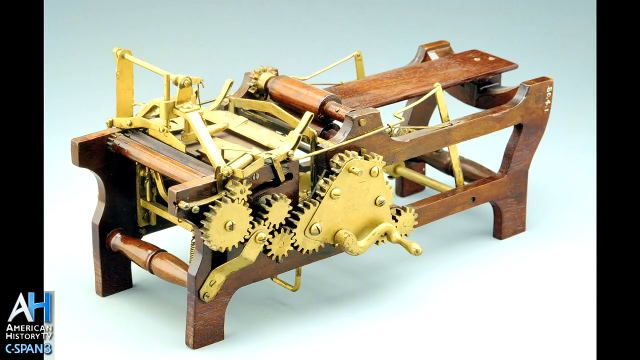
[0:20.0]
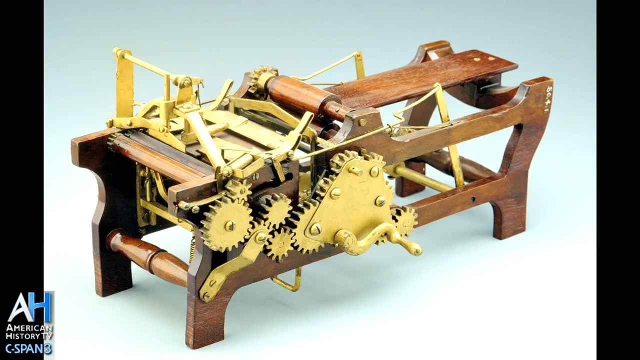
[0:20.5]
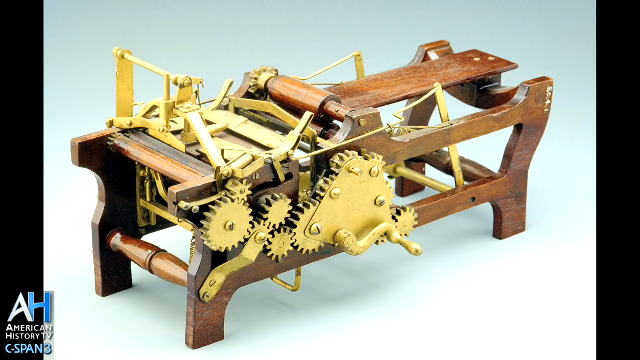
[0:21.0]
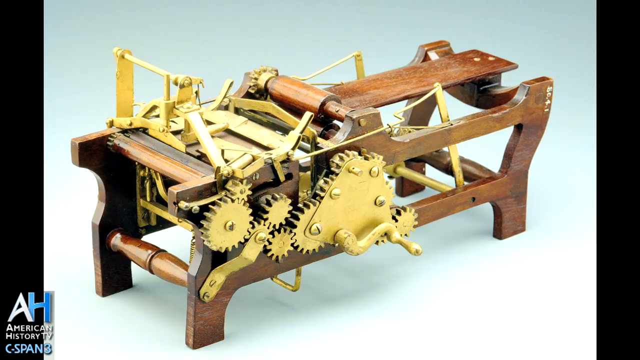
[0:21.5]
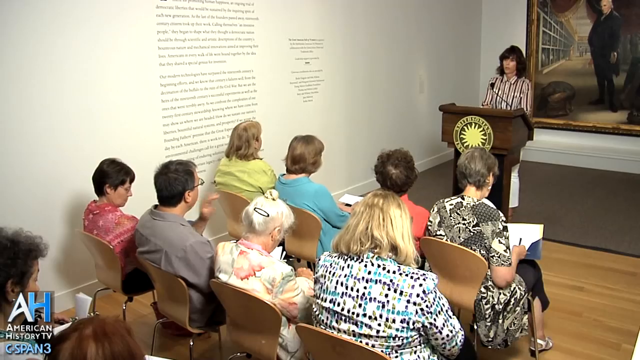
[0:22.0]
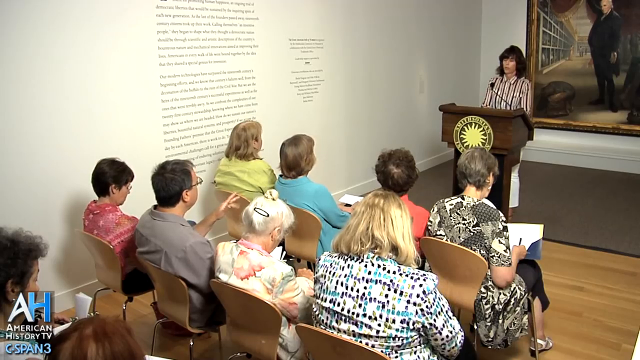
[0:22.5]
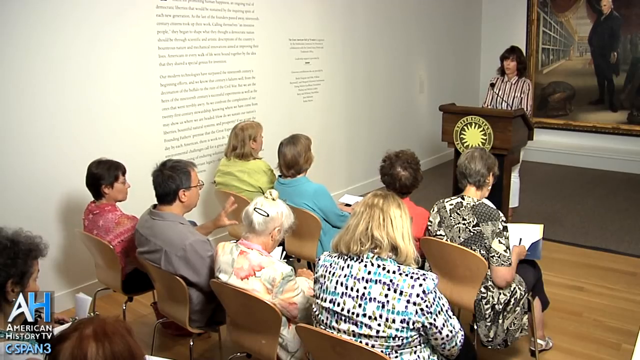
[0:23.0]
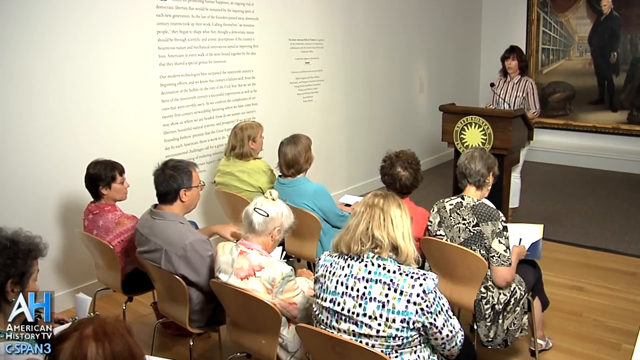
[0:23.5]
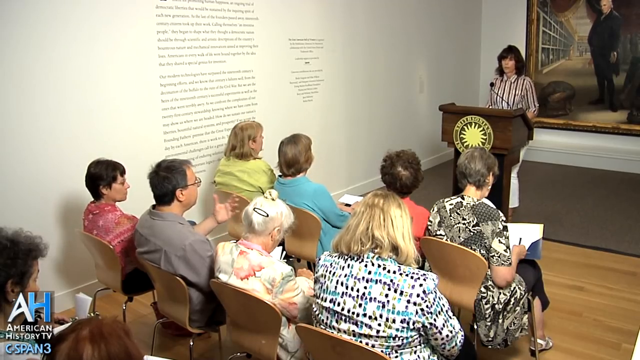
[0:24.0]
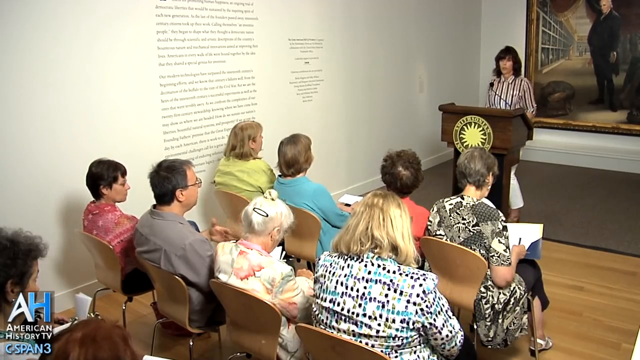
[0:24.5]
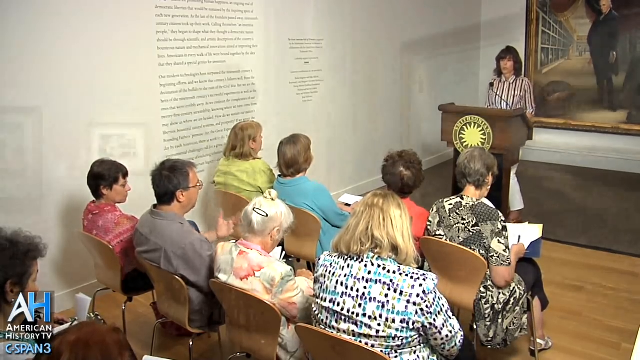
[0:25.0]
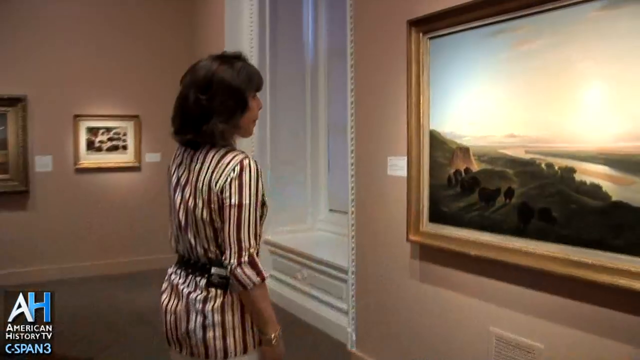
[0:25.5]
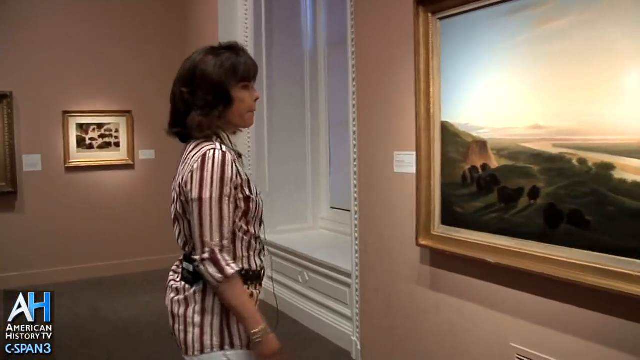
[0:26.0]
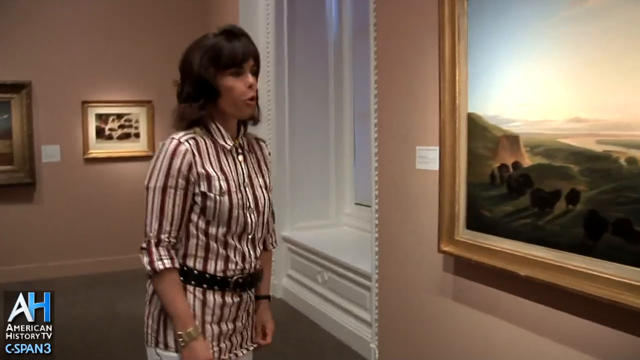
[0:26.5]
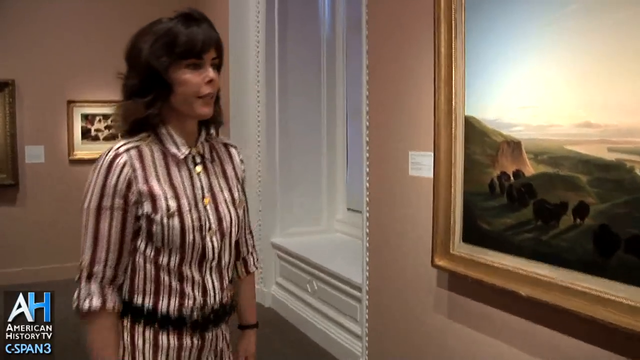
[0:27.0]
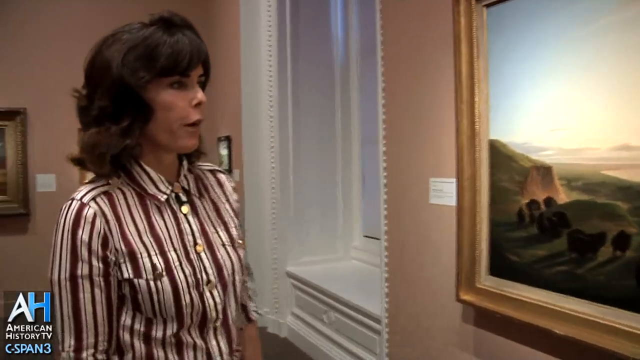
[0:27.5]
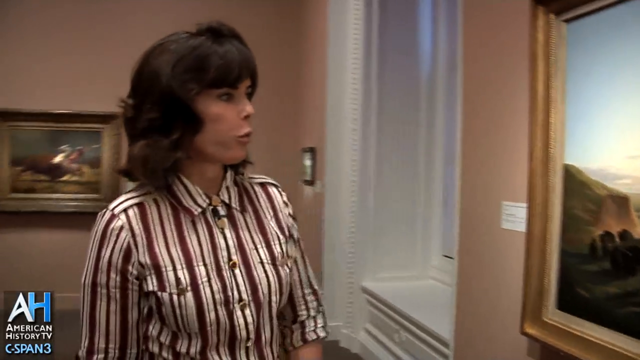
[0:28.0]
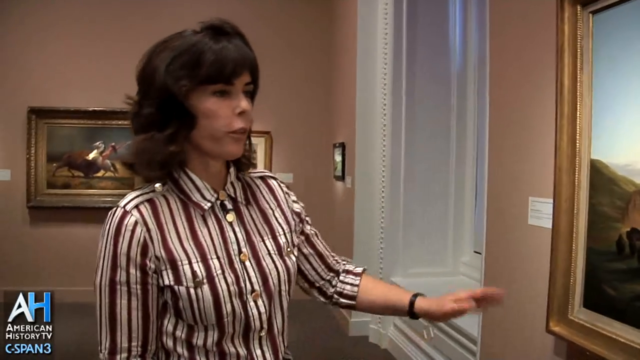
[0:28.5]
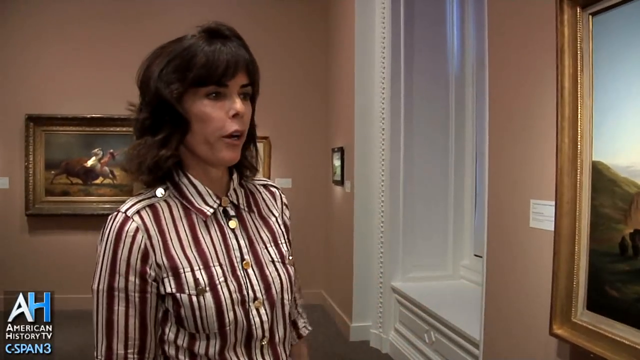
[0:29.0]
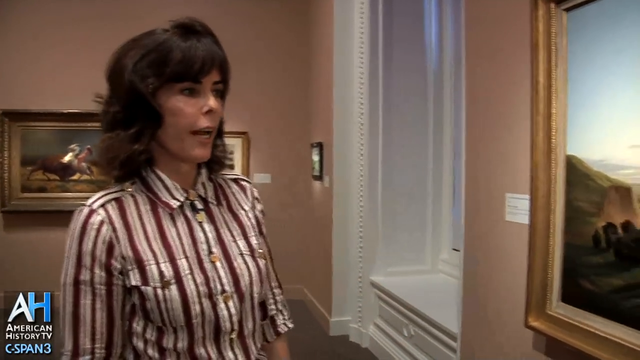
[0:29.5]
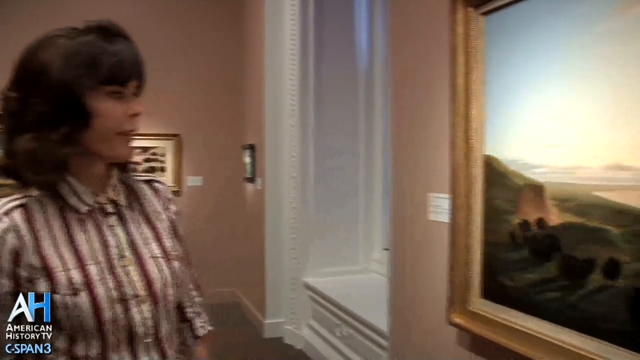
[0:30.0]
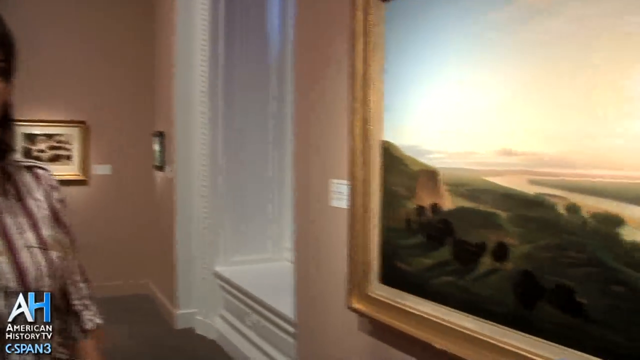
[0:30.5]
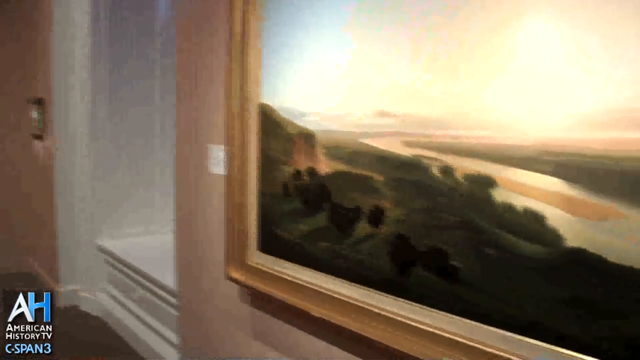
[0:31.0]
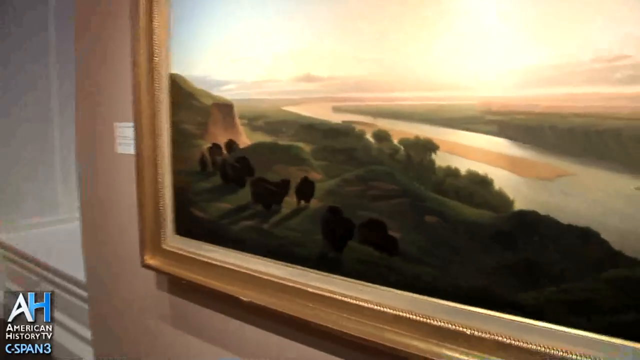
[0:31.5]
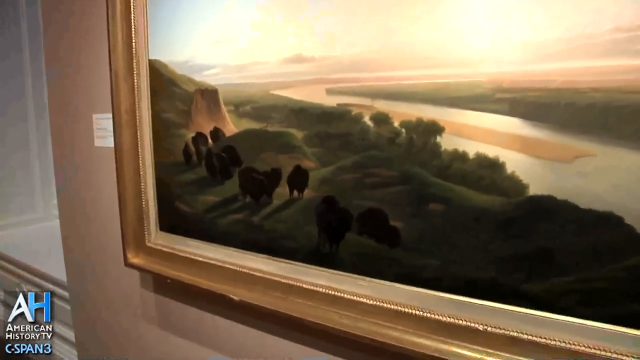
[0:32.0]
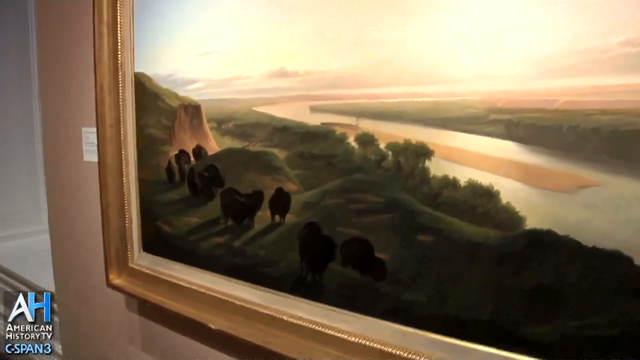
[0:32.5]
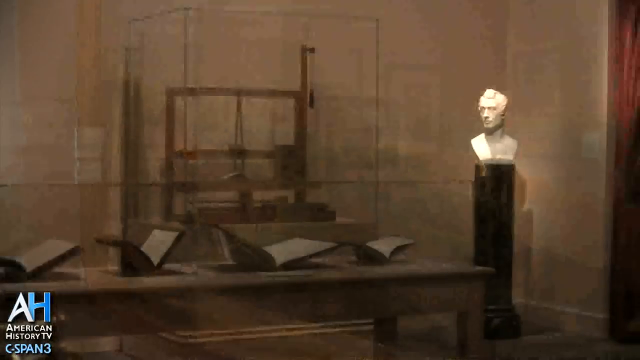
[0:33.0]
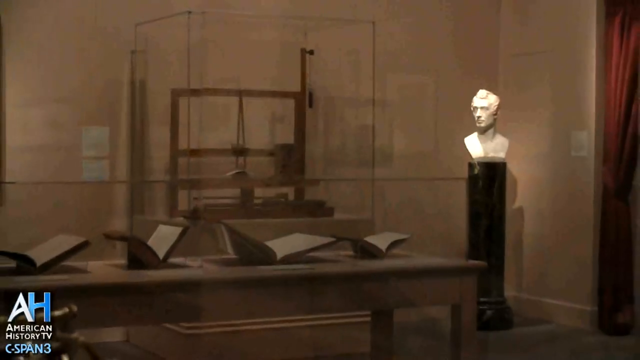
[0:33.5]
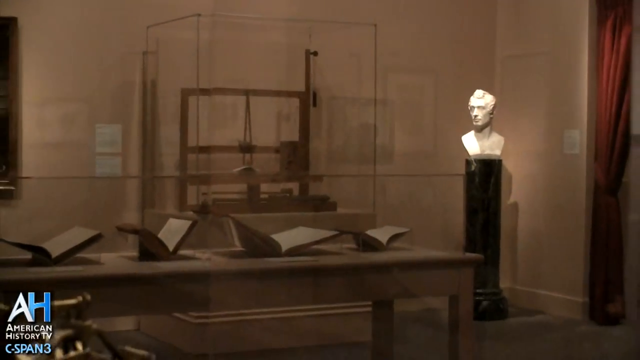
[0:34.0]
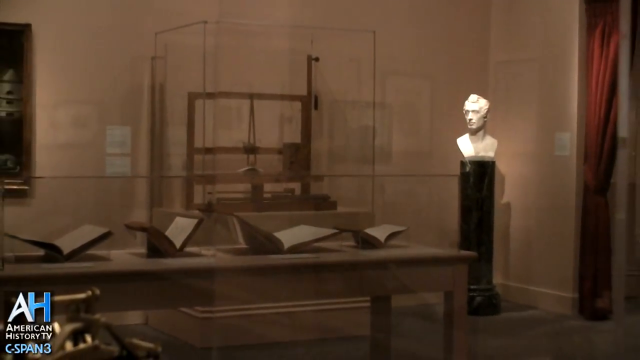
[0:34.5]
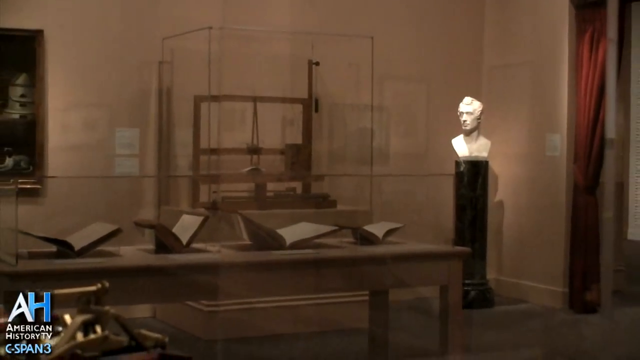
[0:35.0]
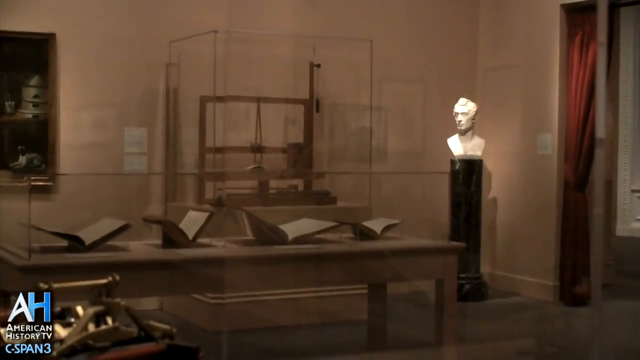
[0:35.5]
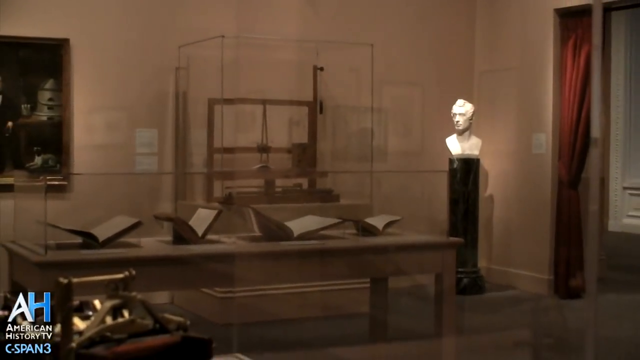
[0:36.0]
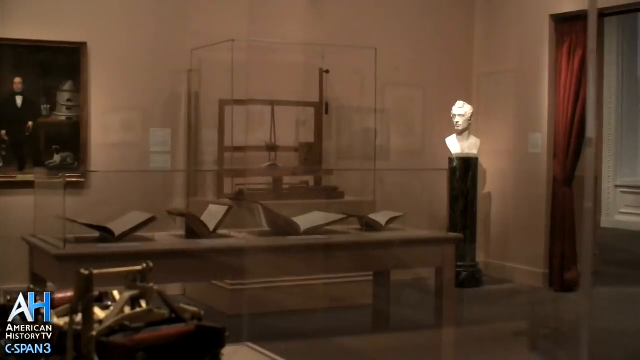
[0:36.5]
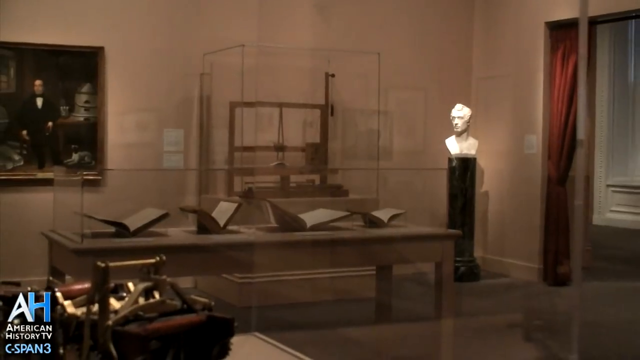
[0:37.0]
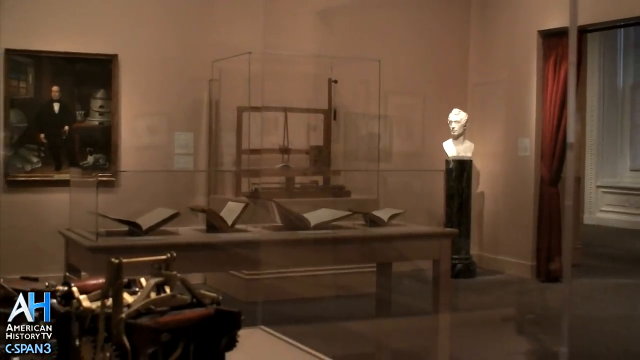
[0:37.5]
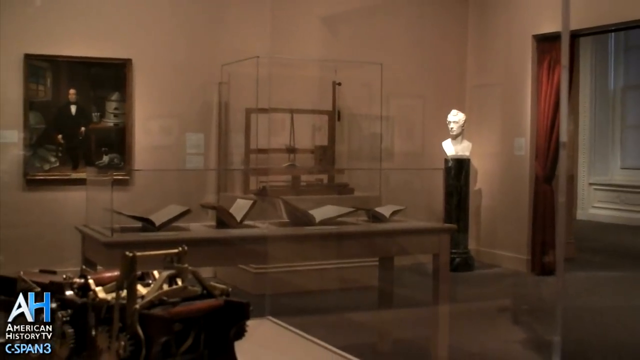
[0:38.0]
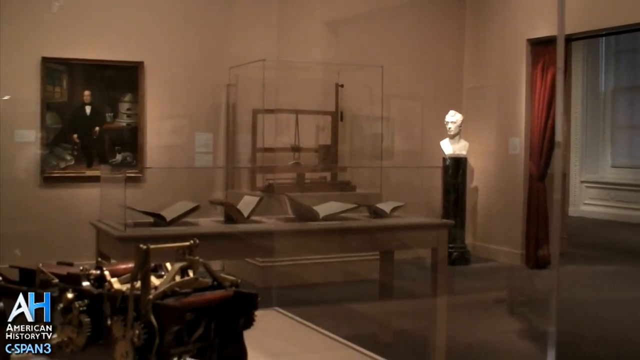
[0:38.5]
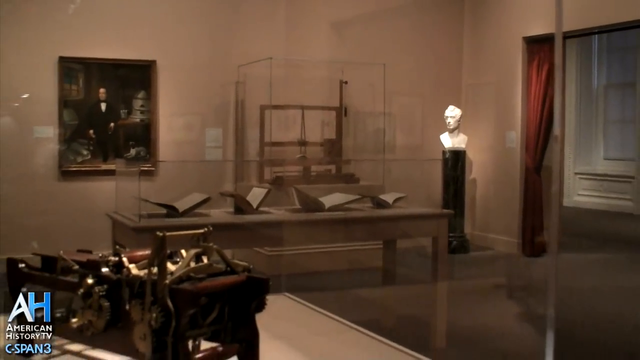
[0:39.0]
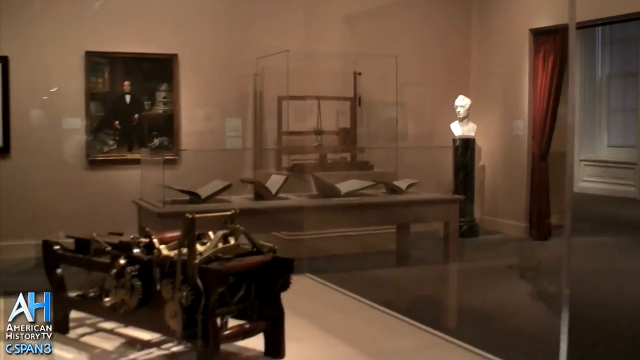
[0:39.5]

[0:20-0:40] Inside the Smithsonian Museum, some type of invention is shown. It has a wooden frame, brass fittings, lots of cogs and gears and something to turn, and it is roughly eight inches wide, so whatever goes into it would be that size and flat. A woman gives a lecture to a group of older people. She wears a vertically striped blouse that looks like silk, with stripes that are white and maroon and maybe mauve, and she has a haircut from around the 90s. She stands at a podium, and the people listen to her, some of them taking notes. She then stands at a painting and appears to be describing it. More inventions are shown, and there is a bust of a man in the corner.